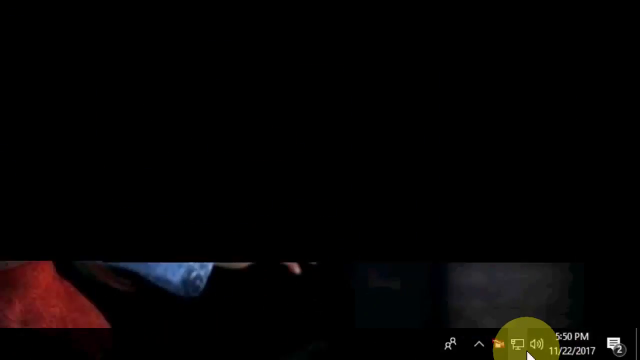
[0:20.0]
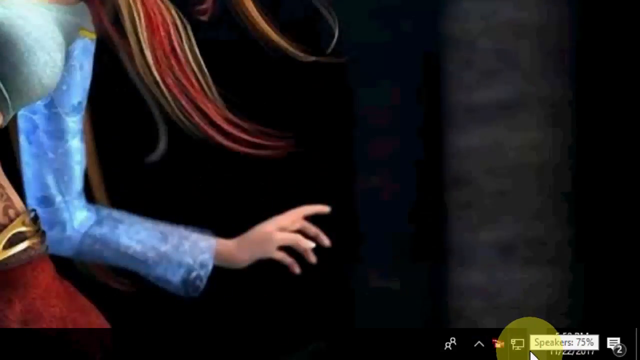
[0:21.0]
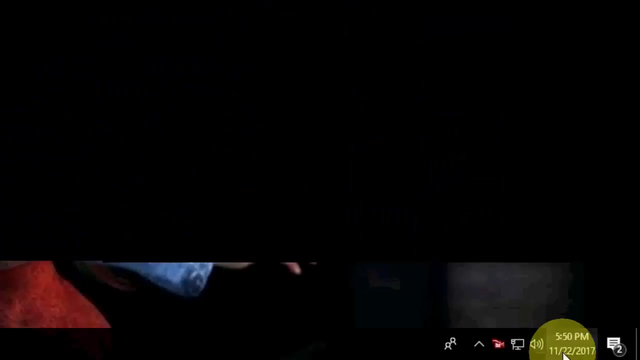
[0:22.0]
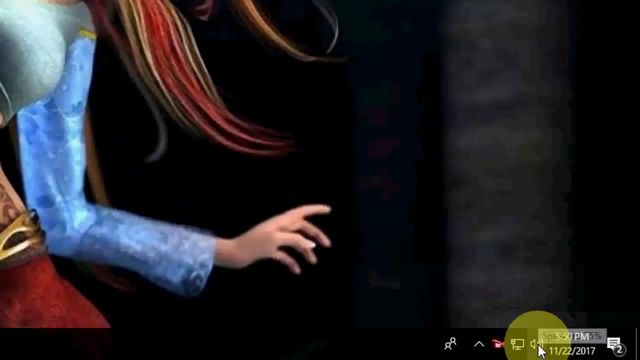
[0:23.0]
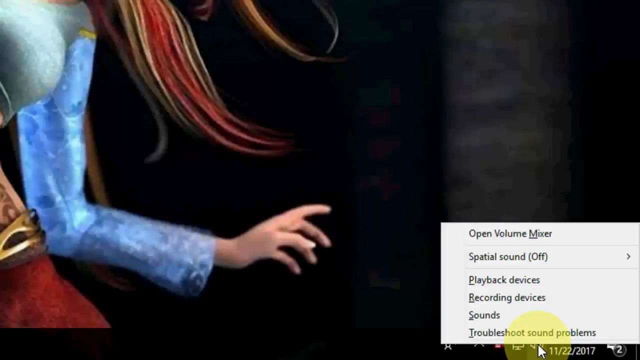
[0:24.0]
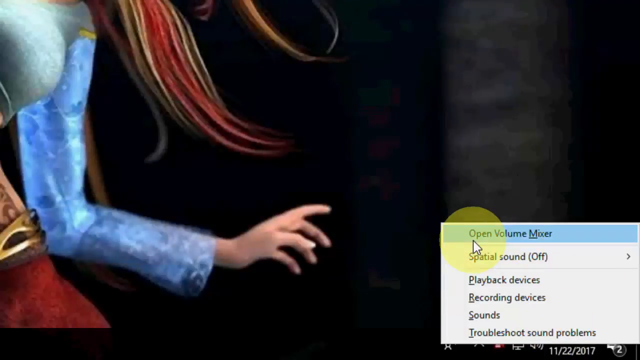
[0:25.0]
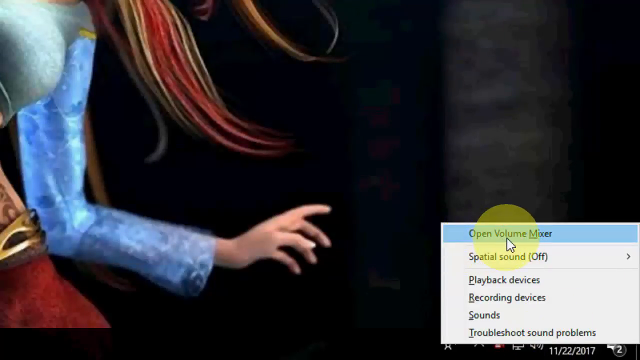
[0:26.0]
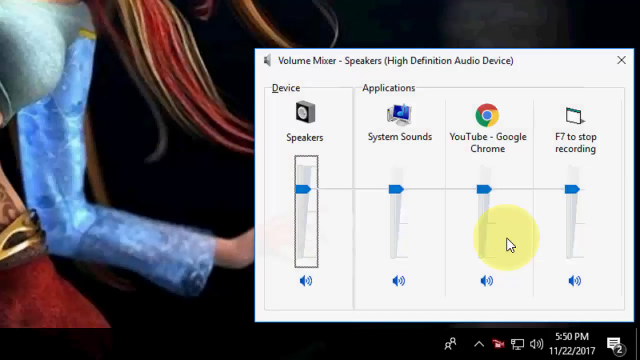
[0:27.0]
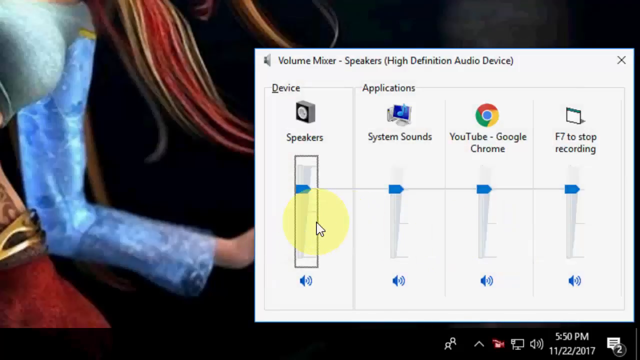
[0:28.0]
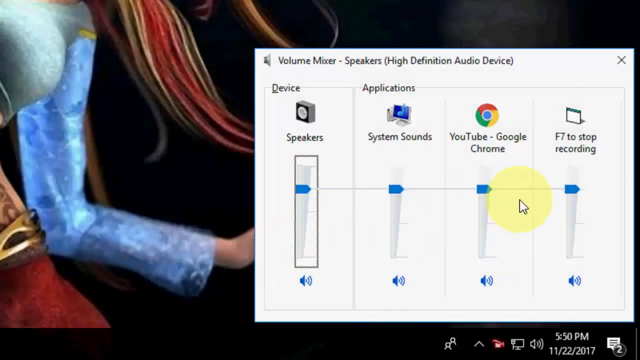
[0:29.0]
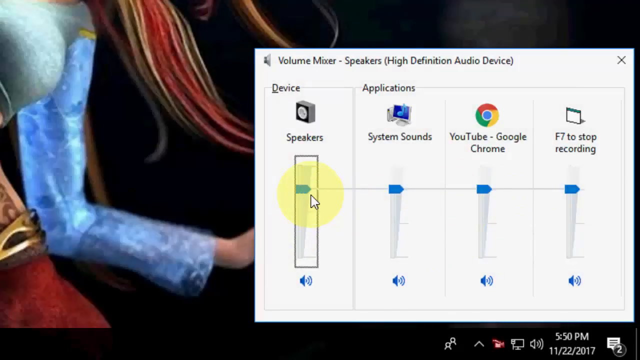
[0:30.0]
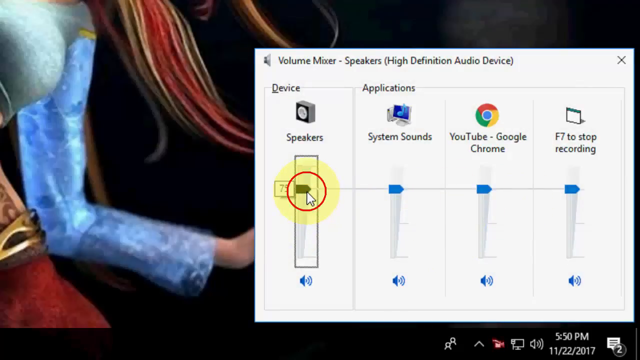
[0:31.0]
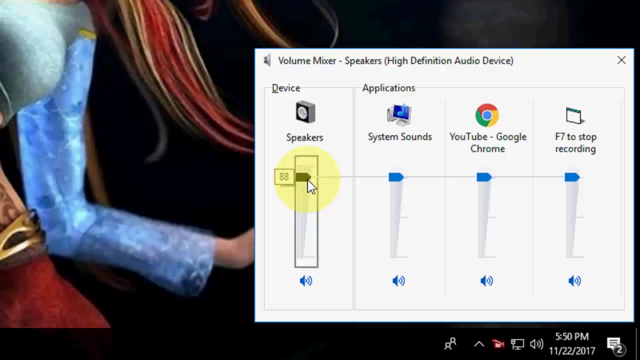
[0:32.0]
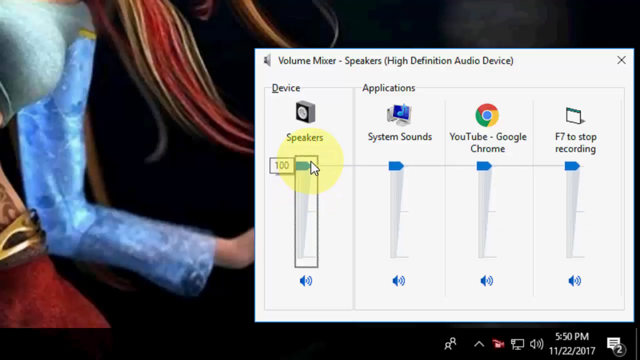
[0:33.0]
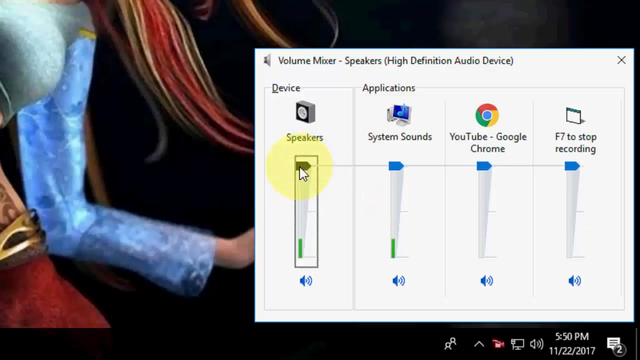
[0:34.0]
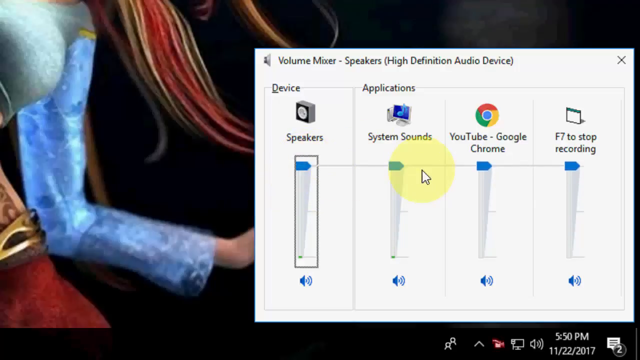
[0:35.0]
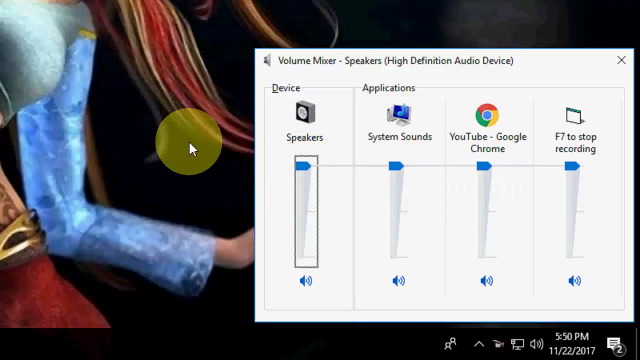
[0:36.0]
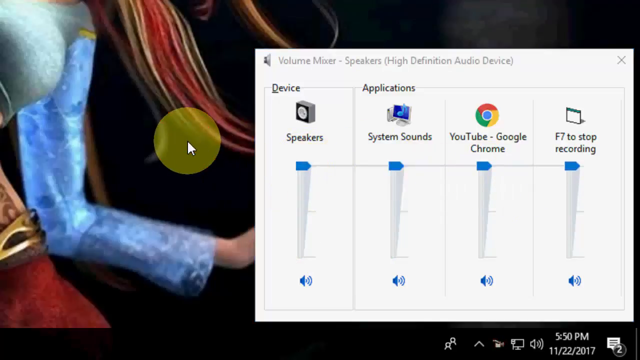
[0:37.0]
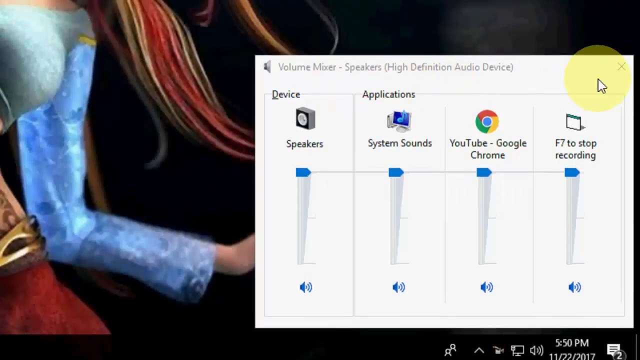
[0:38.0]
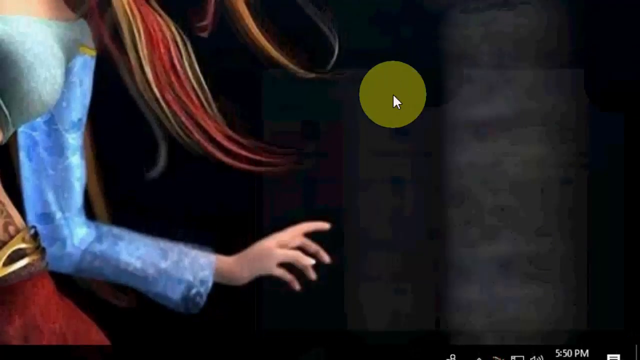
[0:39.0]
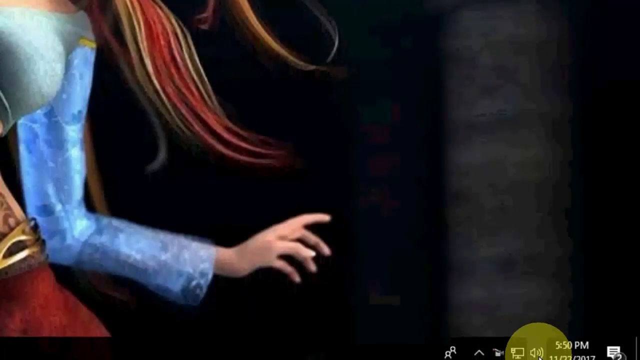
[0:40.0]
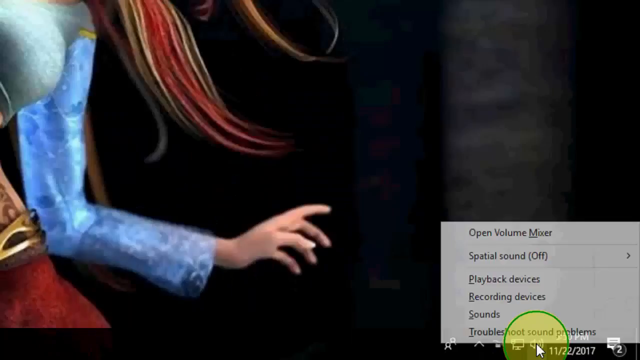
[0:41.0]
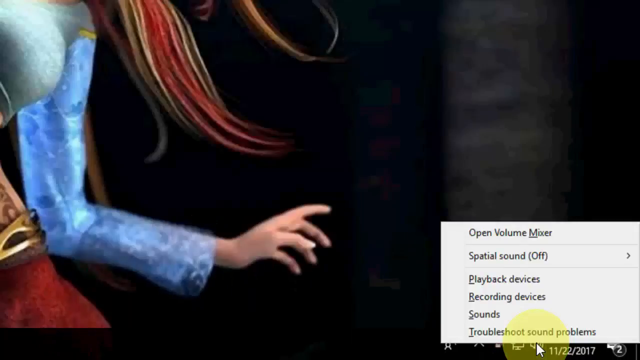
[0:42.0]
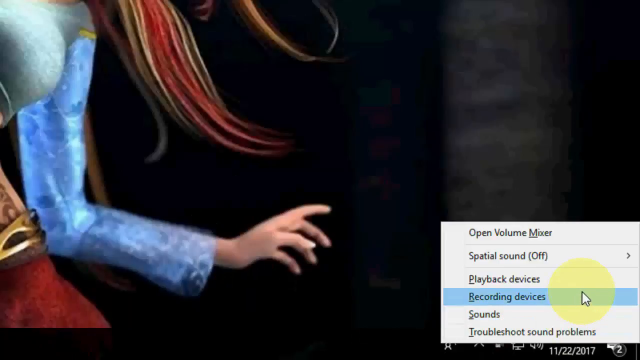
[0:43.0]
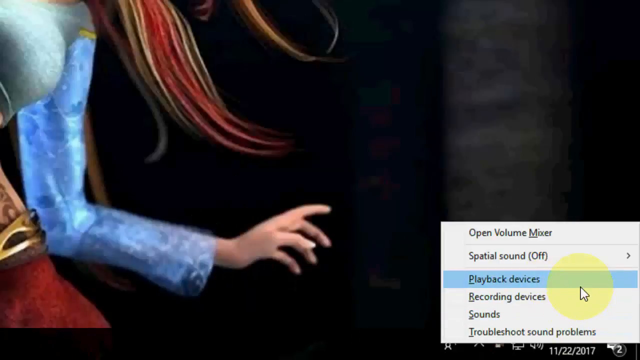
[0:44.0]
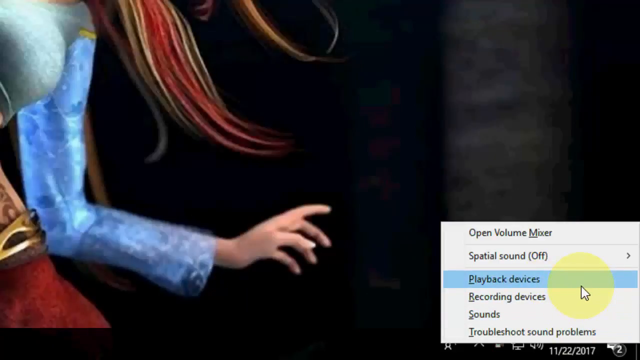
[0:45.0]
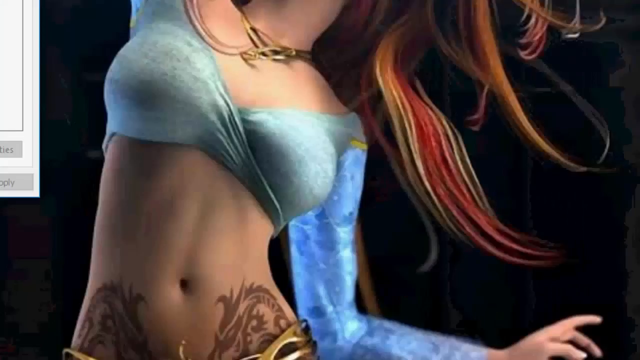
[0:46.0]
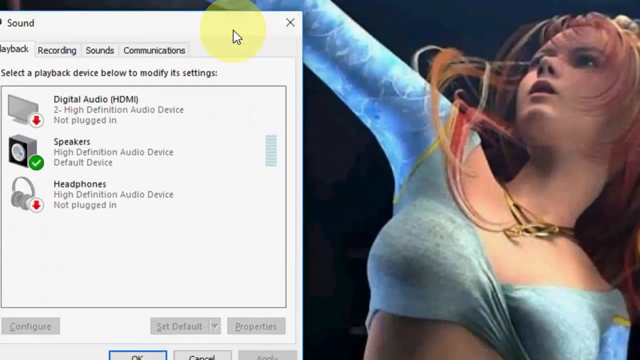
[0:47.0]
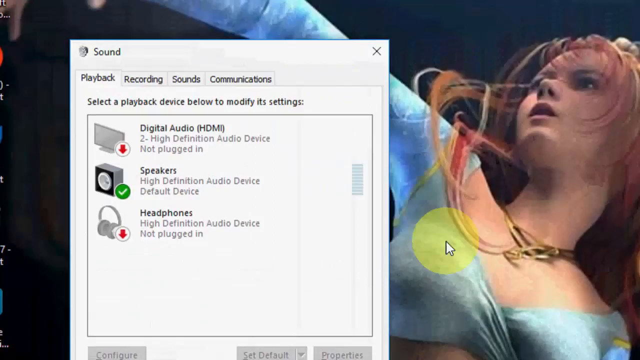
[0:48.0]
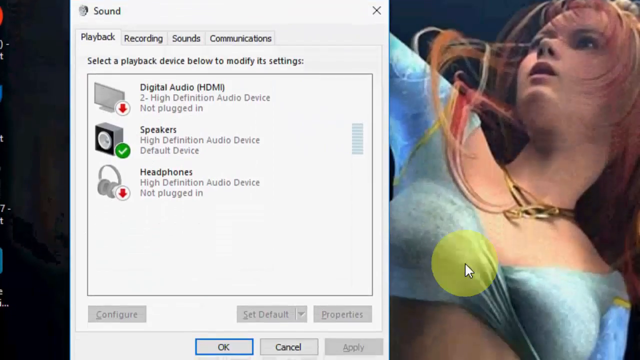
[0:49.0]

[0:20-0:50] The screen looks glitchy and jumps around, cutting in and out; it looks like it is showing a picture of a woman. Suddenly the cutting stops and a menu pops up in the lower right-hand corner, so everything can be seen still. The menu lists options including "open volume", "spatial sound", "playback device" and "recording device". The image is of a red-haired anime character wearing a tight greenish top with blue sleeves and tight red pants with gold trim; she may be dancing. The person moves the mouse around while the picture is frozen, moves the volume settings on their speakers, and switches through YouTube, Google and the major sound settings.